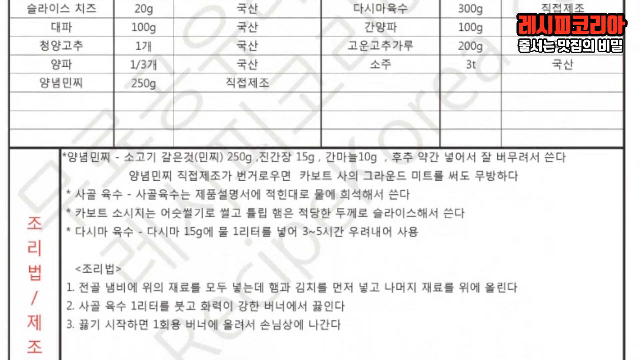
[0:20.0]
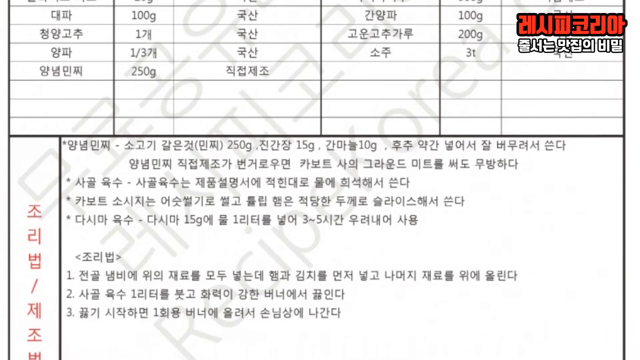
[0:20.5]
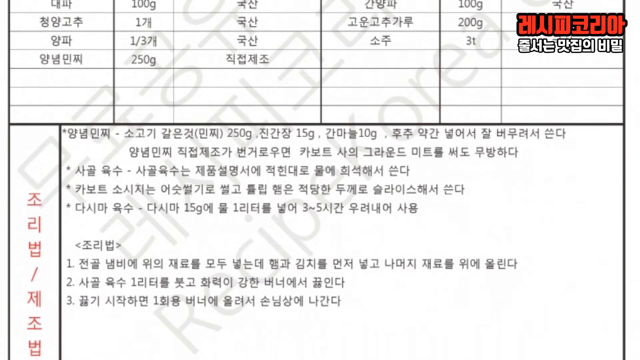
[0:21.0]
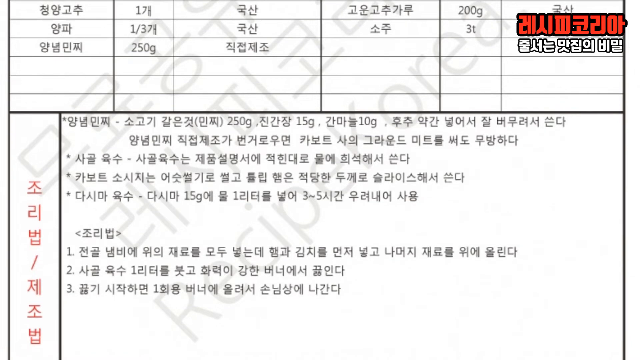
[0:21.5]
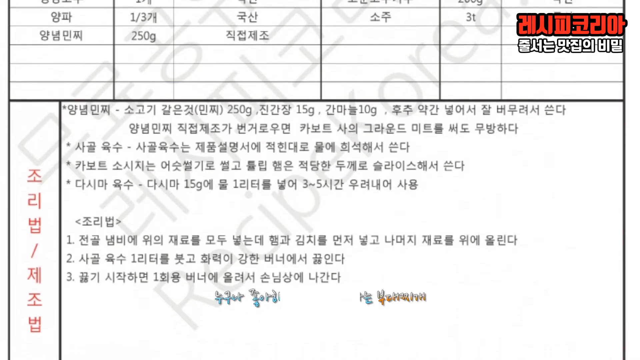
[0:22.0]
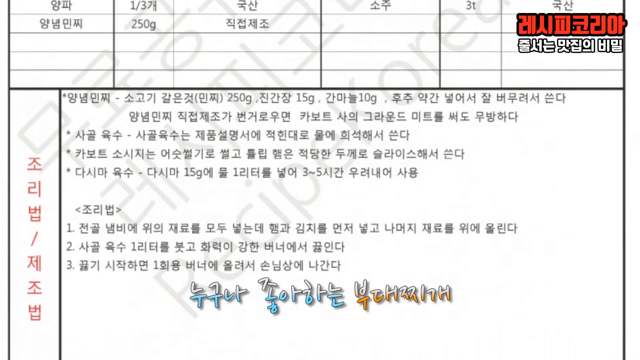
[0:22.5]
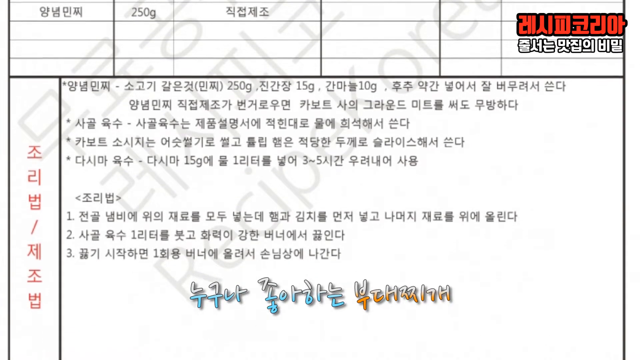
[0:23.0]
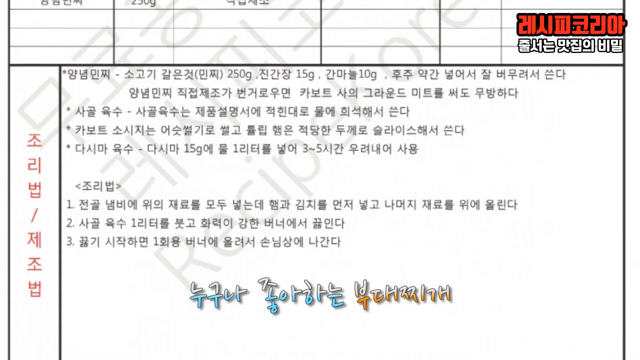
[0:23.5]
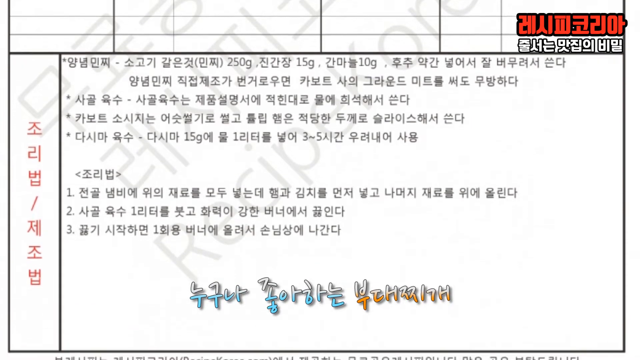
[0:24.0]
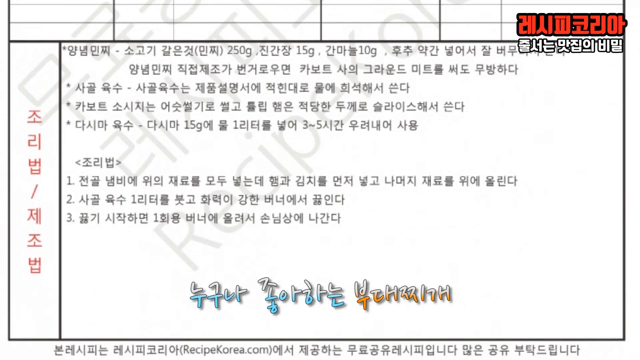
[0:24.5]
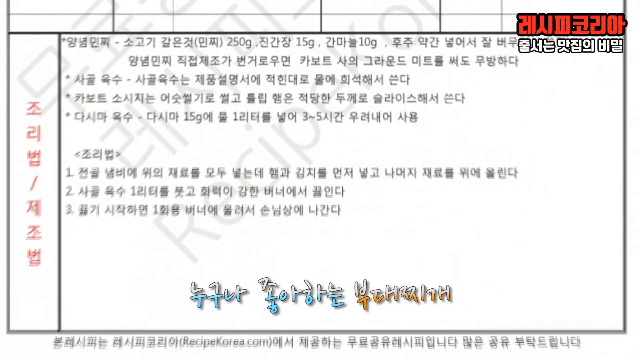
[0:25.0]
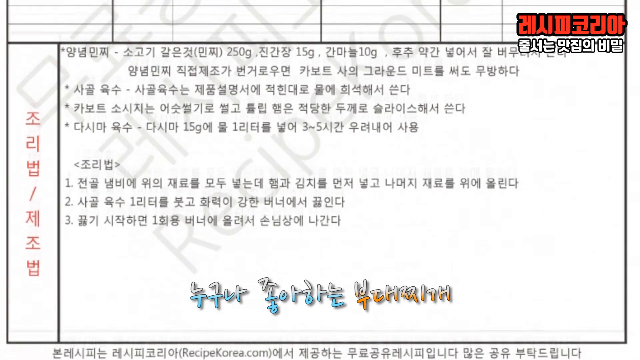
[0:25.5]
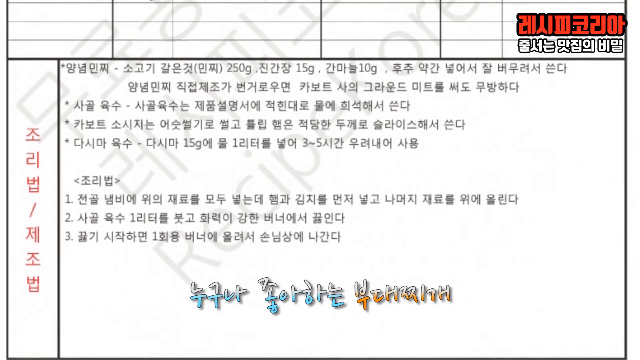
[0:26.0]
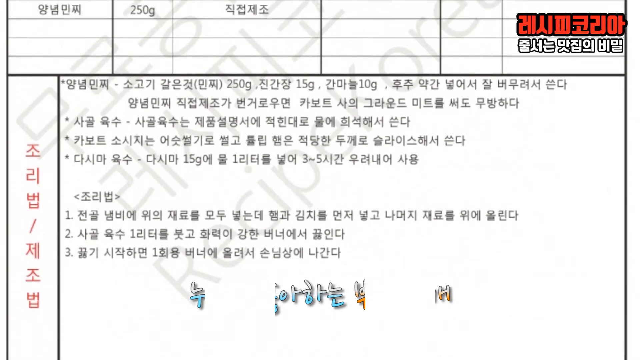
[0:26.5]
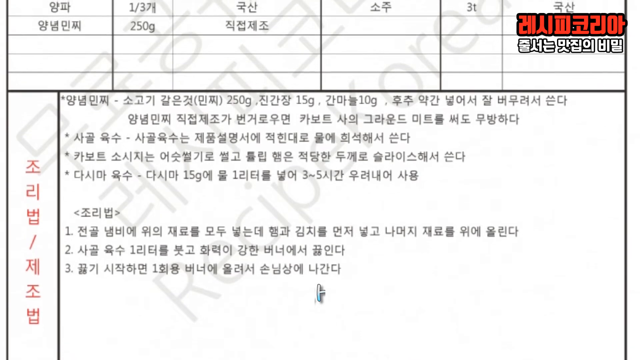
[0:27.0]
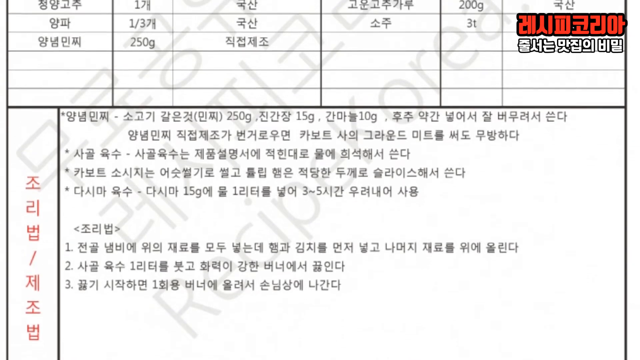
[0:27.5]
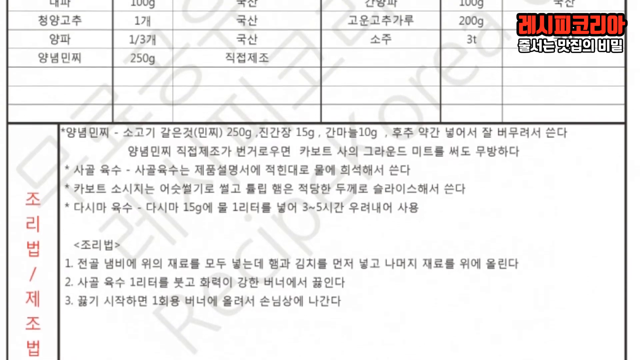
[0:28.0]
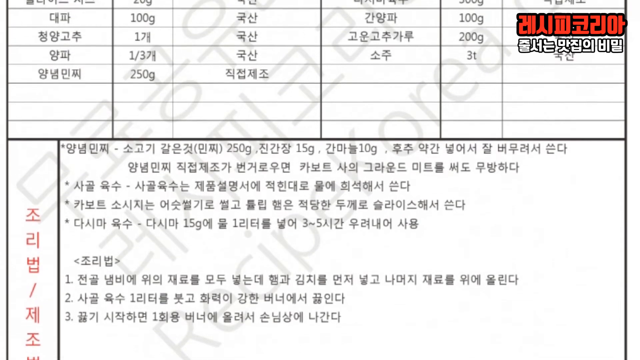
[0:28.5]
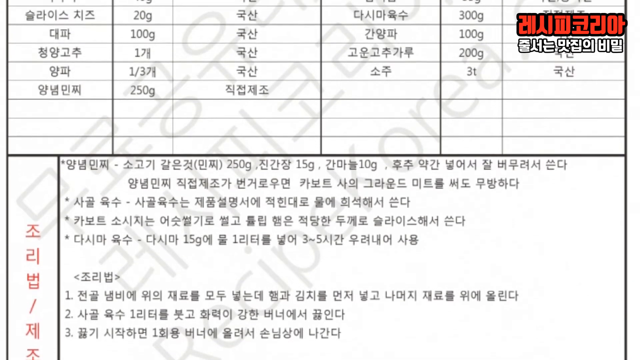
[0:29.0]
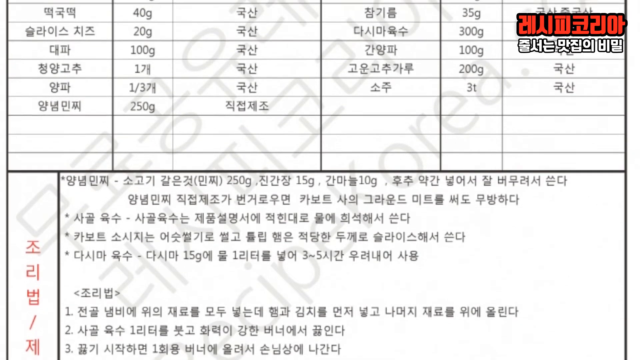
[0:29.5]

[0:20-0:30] The video concentrates on the bottom of the form, scrolling up and down that portion. It consists of two sections. The first has a heading and three bullet points and contains the weights 250 grams, 15 grams and 10 grams. The second has a heading and the numbers 1 through 3. To the far left of both sections is vertical Korean text in bright red. The video then scrolls back up to the price list.